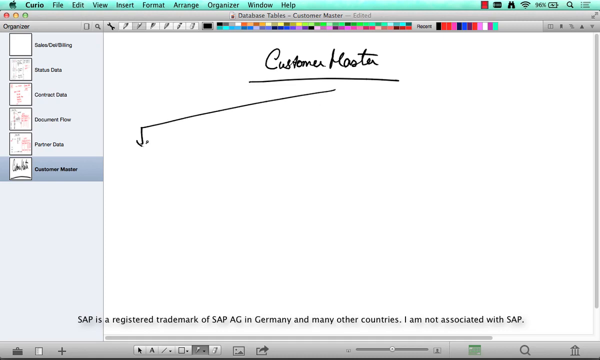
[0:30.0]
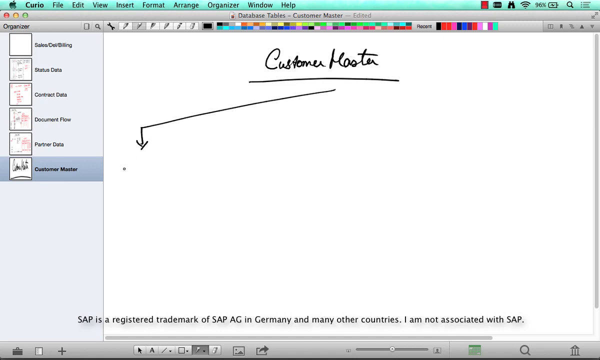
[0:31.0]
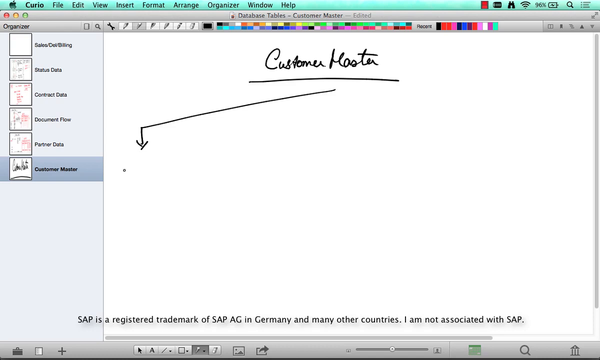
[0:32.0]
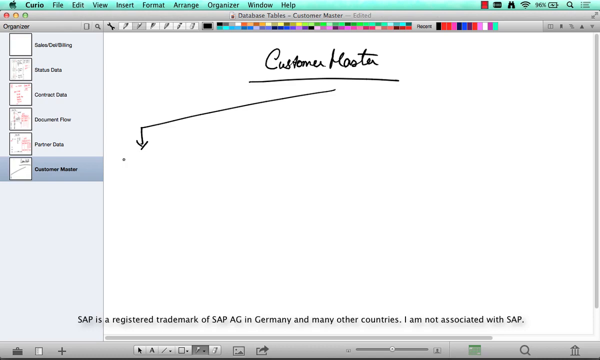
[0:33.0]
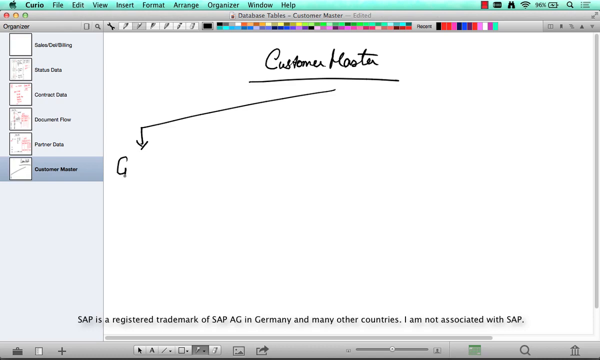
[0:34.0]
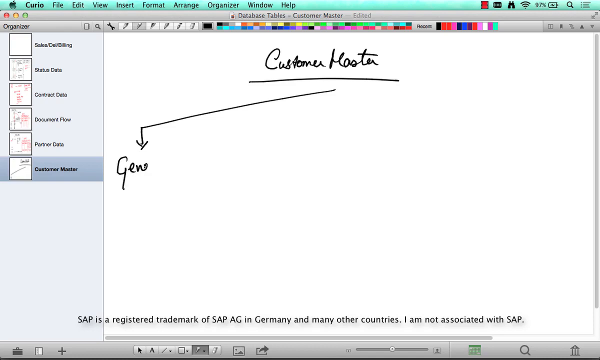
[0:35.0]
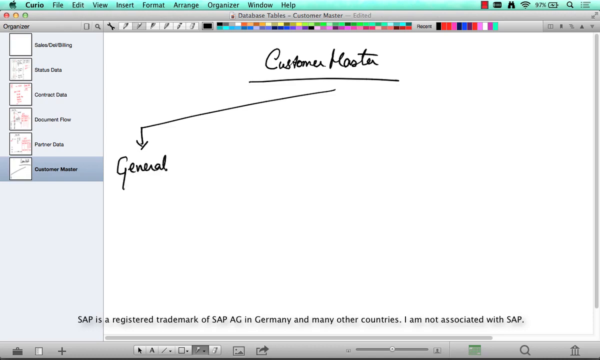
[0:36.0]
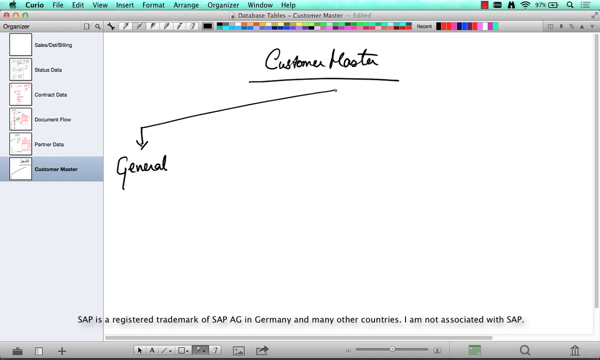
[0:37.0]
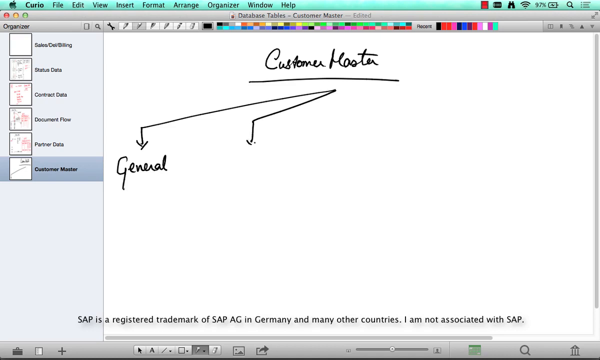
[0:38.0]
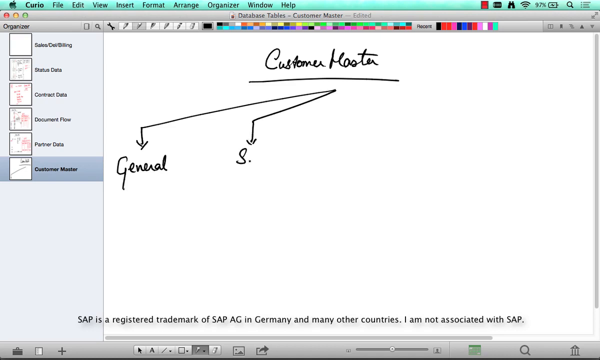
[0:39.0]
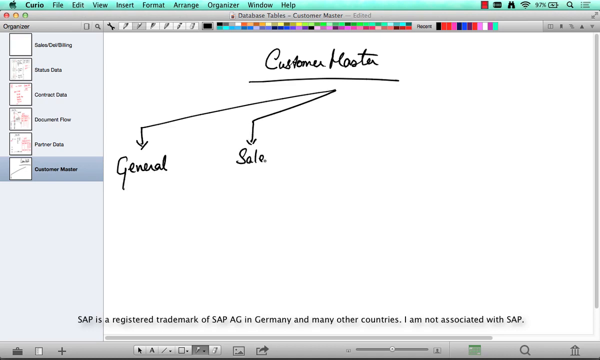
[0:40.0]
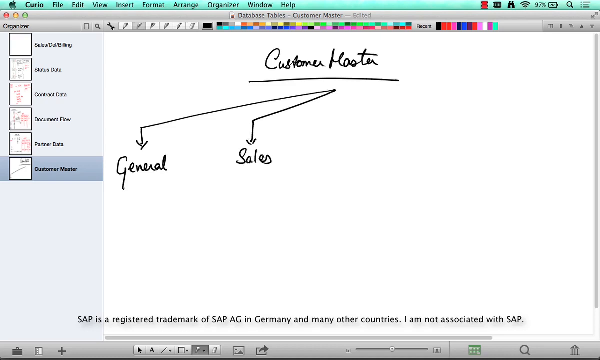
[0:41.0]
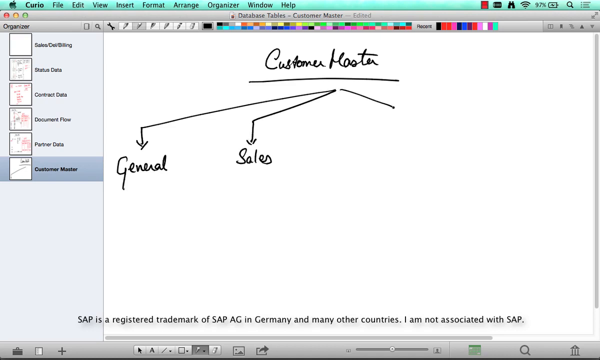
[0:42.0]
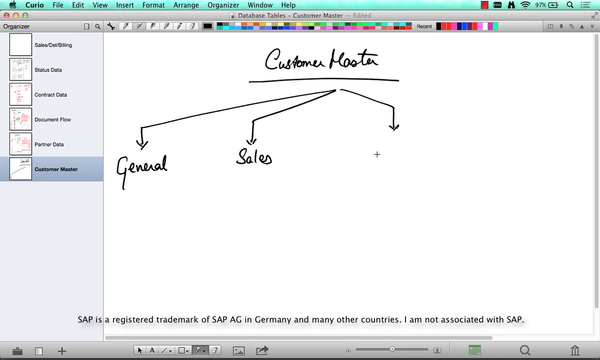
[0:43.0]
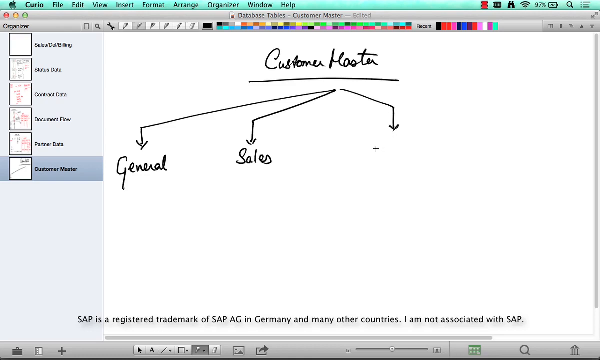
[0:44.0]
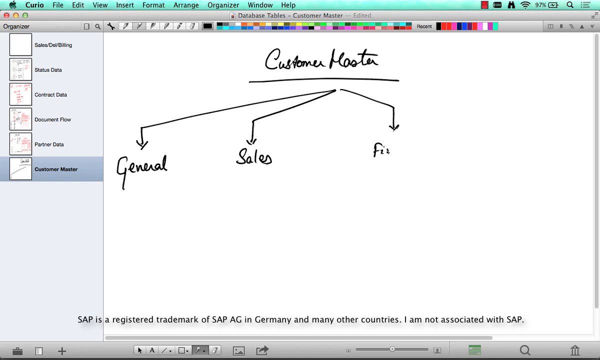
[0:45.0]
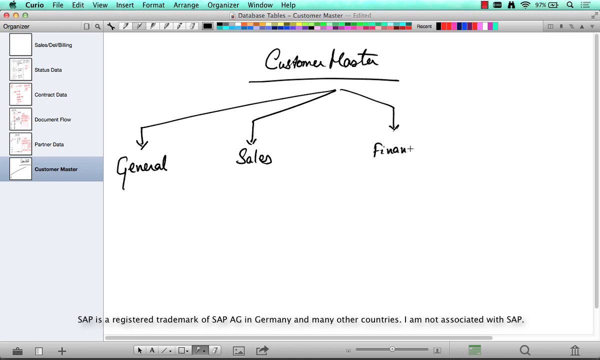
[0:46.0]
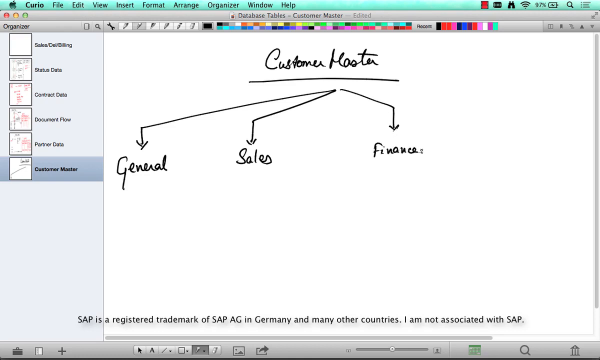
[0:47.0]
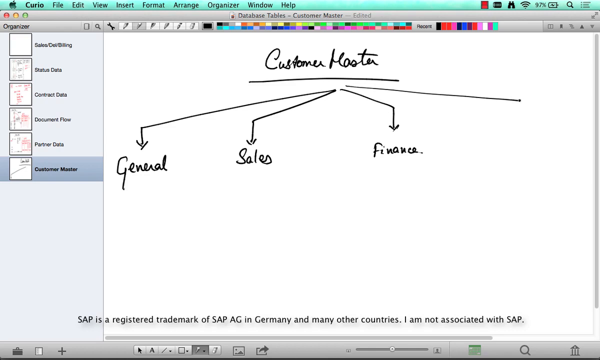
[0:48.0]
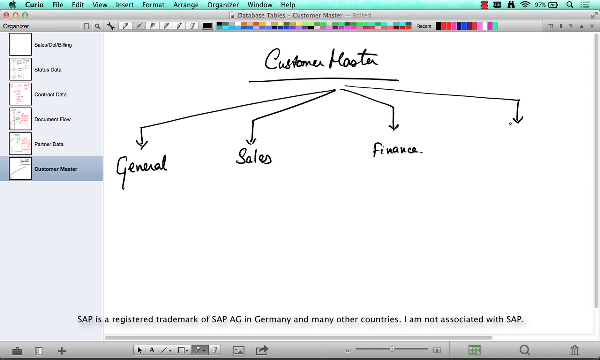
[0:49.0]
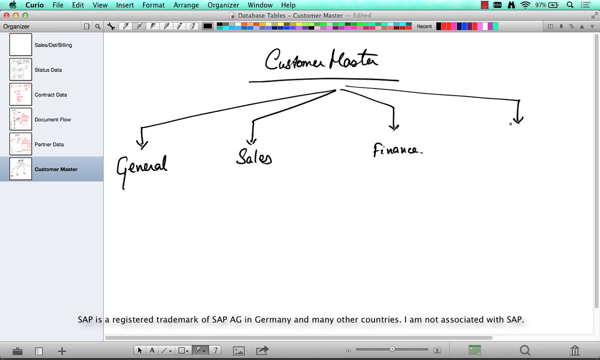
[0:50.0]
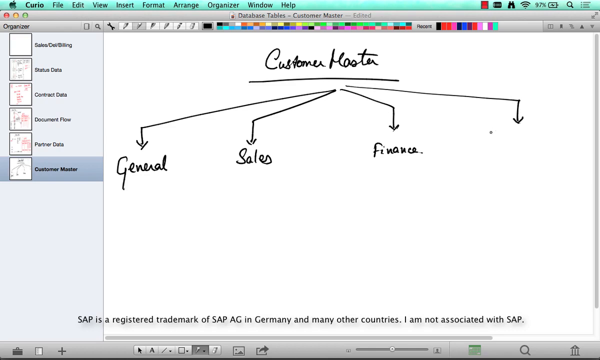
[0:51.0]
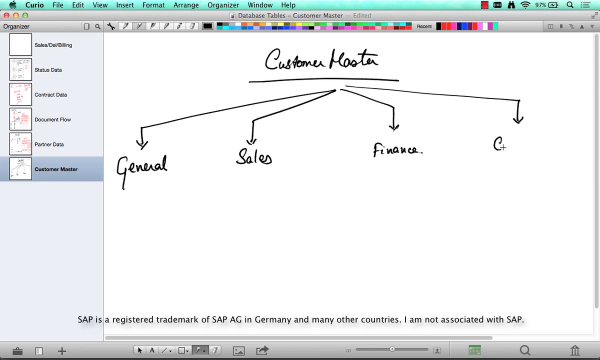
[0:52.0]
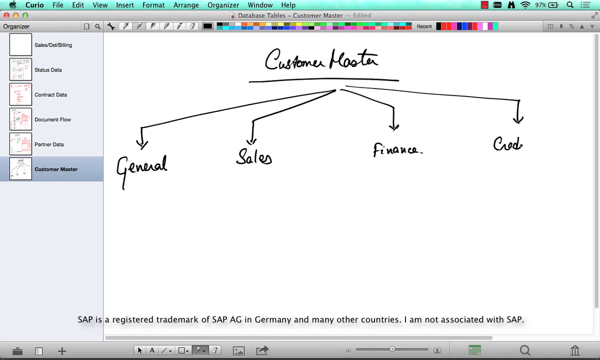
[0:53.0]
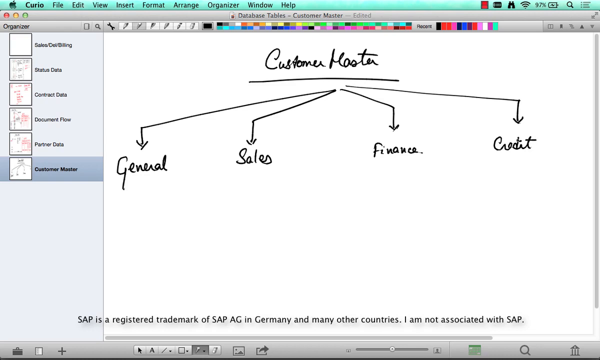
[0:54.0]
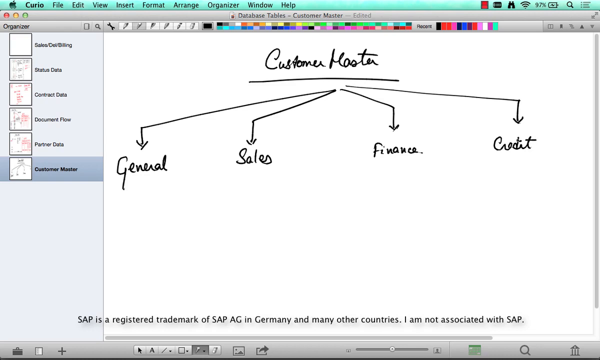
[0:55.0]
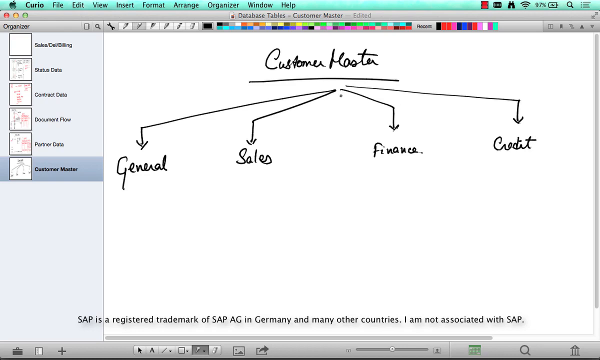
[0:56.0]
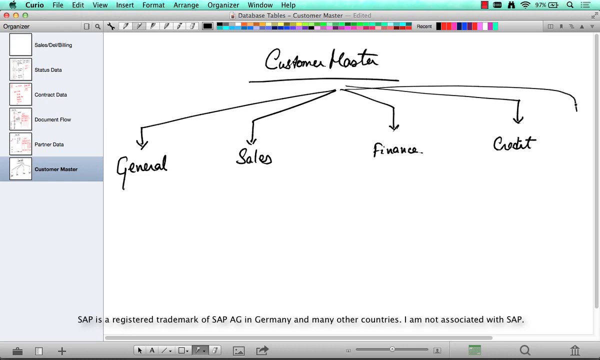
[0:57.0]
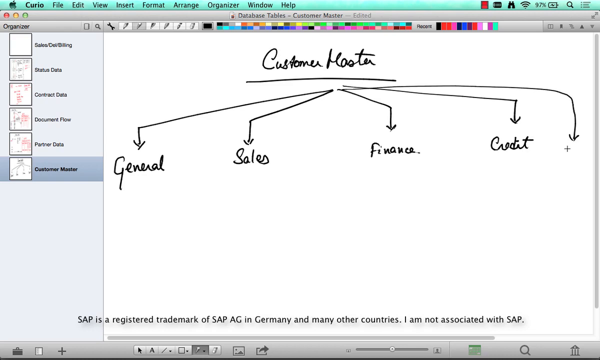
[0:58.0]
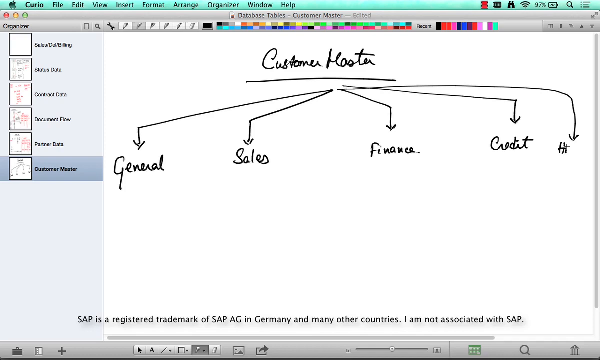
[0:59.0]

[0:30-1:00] A large arrow is drawn from the center of the customer master underline to the left, with a little down arrow below it, and "general" is written underneath. Another arrow goes from the center to the middle left with "sales" below it, another from the middle to the right with "finance", and one far arrow from the middle to the far right with "credit". The handwriting is a bit messy and rough but still readable. One more arrow is squeezed in to the right of the word credit; it is not very well drawn and looks like an afterthought, and something is written there but cut off. The writing is in black pen. The top bar has about six pen options, one of which is possibly an eraser, and the pen option second from the left is highlighted. Several colors are available, arranged in two rows of many columns.